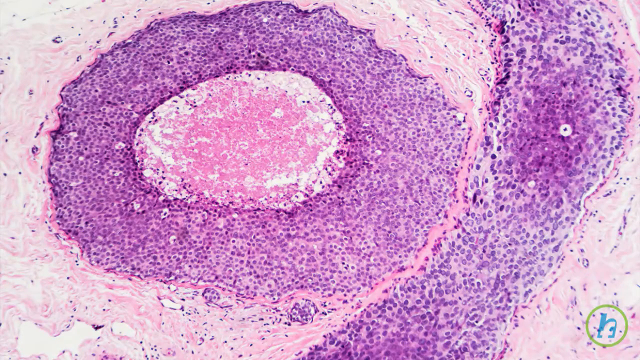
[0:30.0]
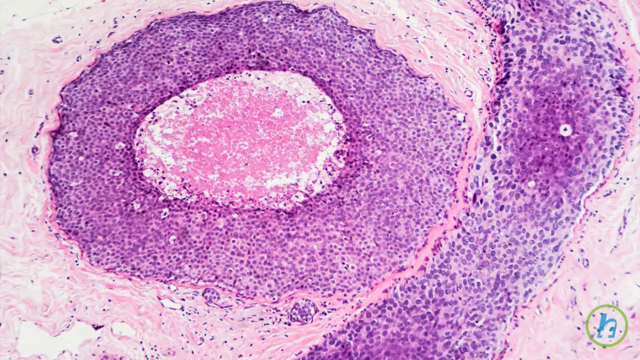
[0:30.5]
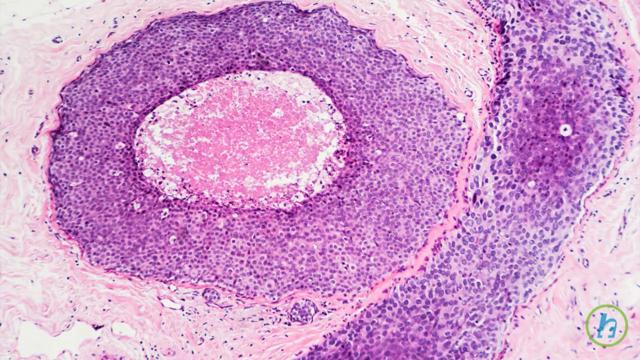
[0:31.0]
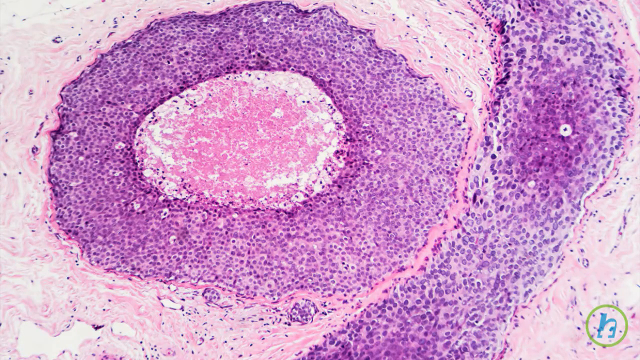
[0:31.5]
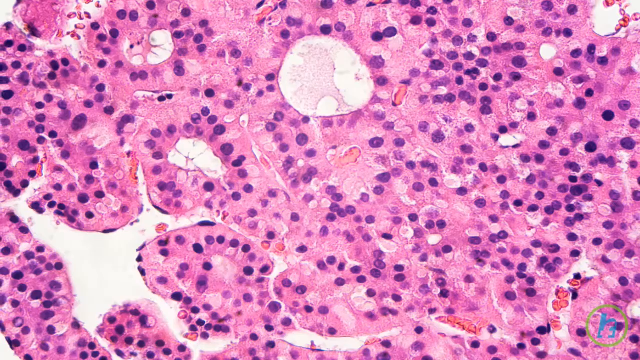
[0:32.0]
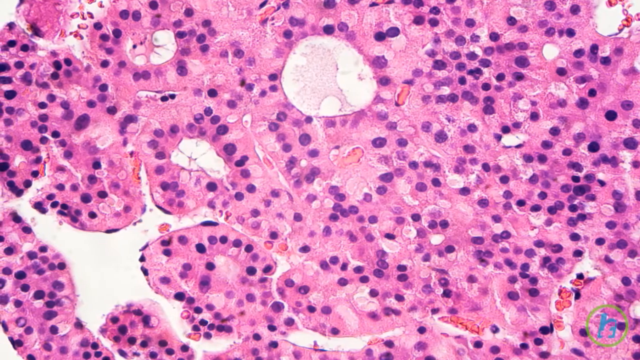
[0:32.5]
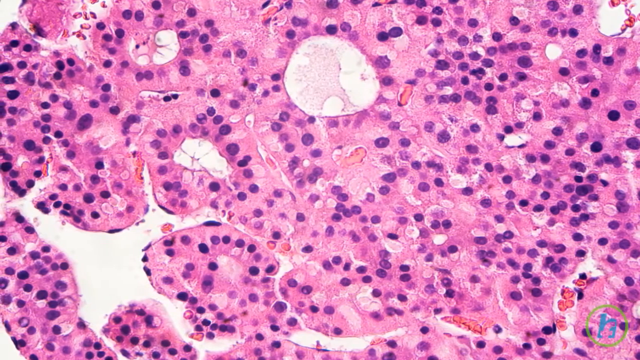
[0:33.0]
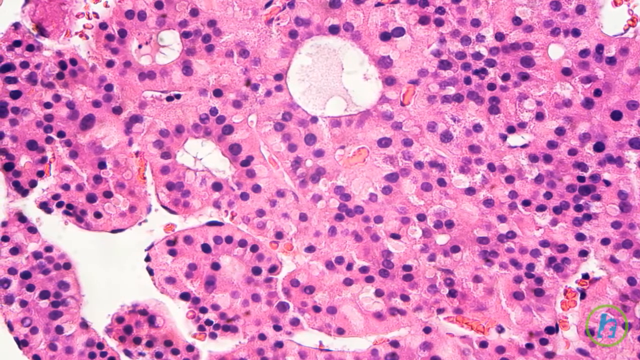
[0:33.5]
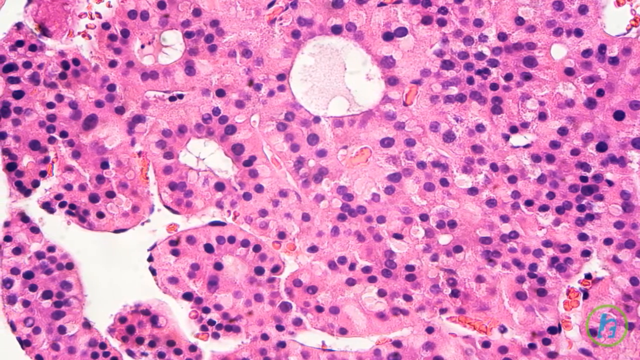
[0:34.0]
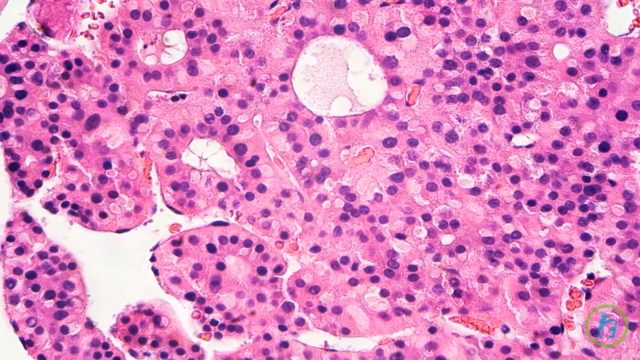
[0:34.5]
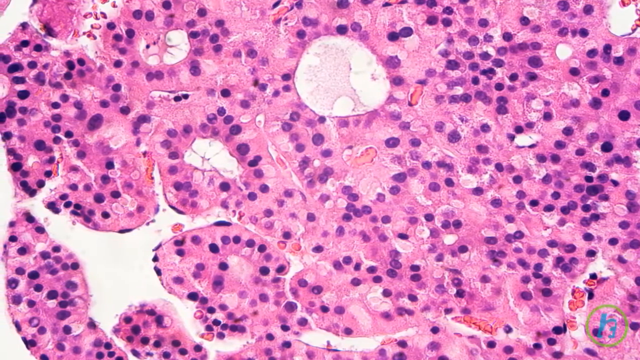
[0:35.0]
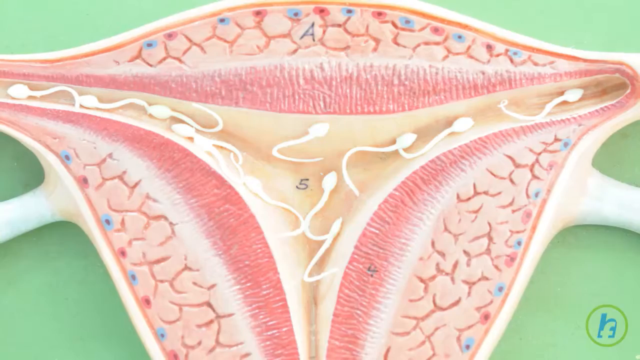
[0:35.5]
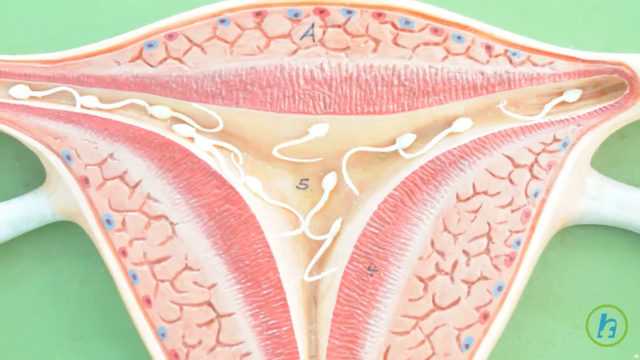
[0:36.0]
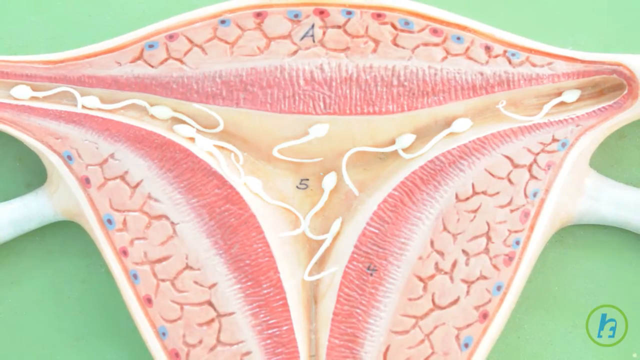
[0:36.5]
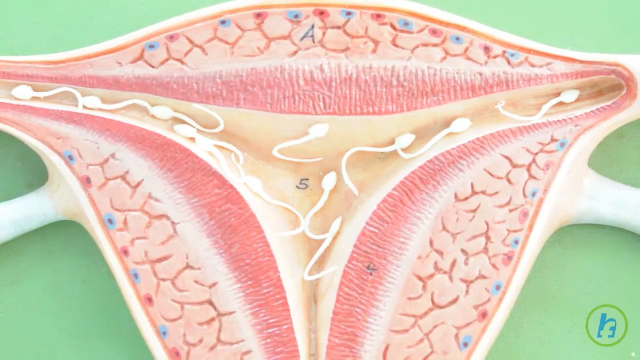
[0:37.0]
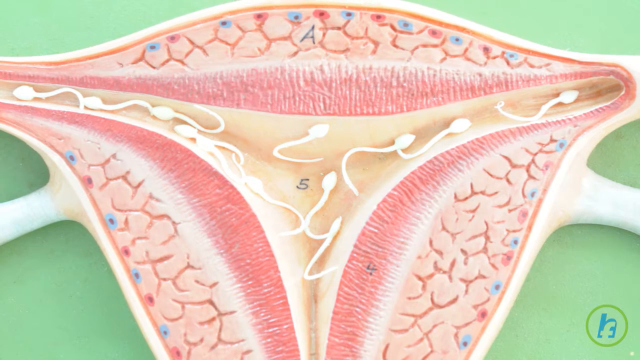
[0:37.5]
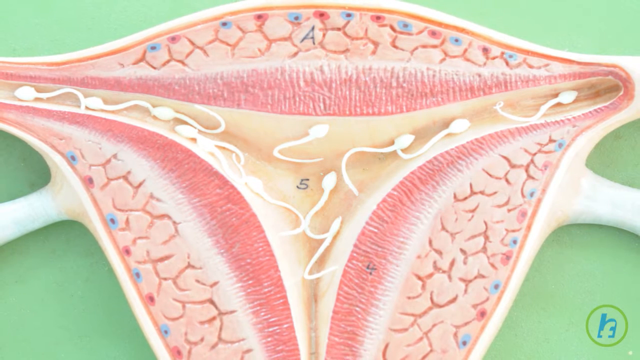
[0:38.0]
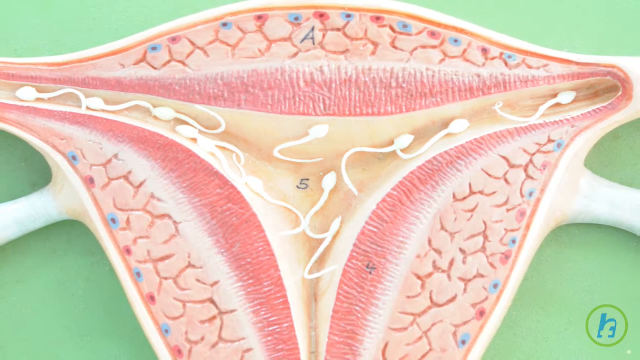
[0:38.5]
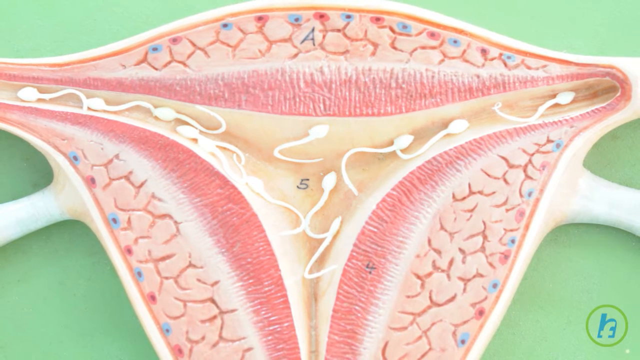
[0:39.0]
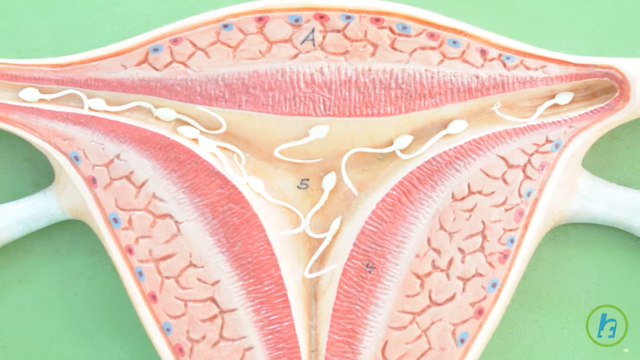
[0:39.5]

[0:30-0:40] More of the purple, cell-like molecules appear. First there is one with a giant circle in the middle that goes around in a circle; the middle of that circle has a pinkish, whitish color on the inside, becomes dark purple toward the outside, and then turns a lighter purple. The pinkish middle part seems to be part of the main body, since the rest loops around it, almost in layers.